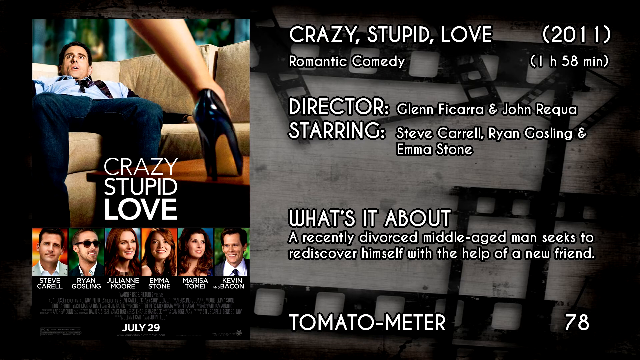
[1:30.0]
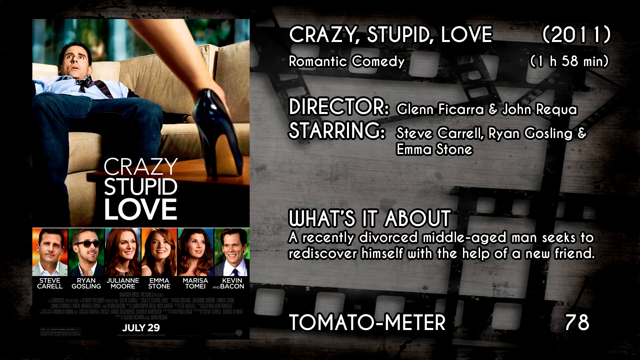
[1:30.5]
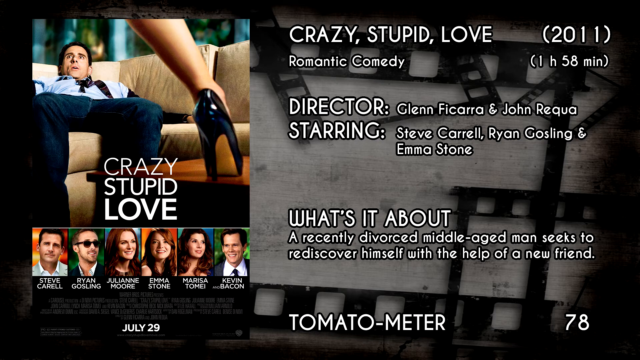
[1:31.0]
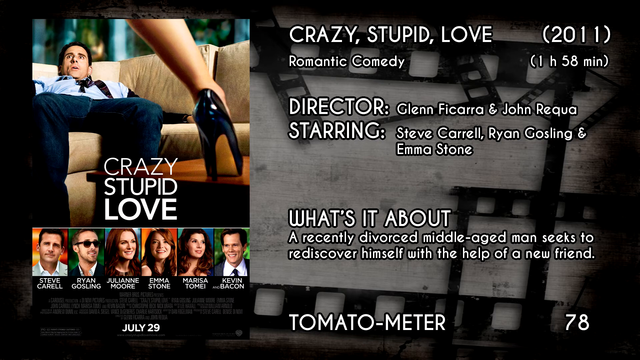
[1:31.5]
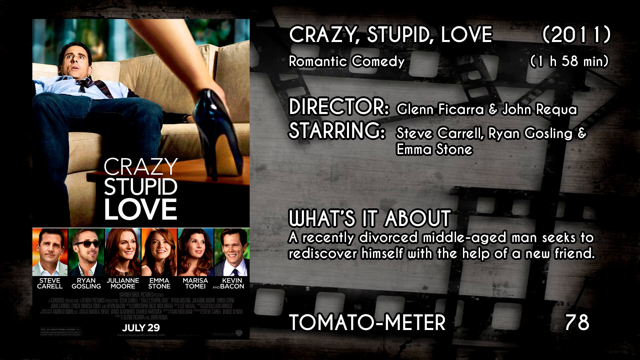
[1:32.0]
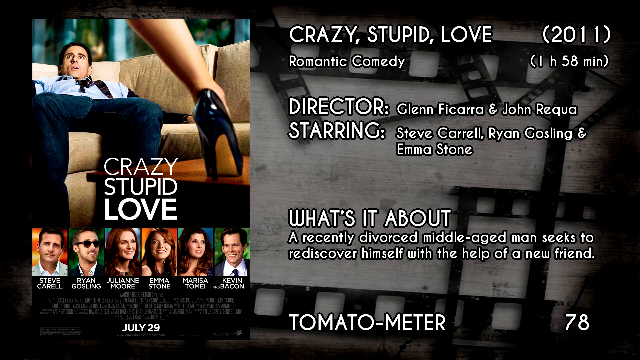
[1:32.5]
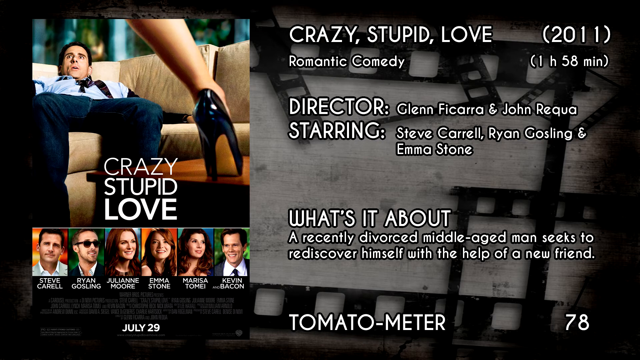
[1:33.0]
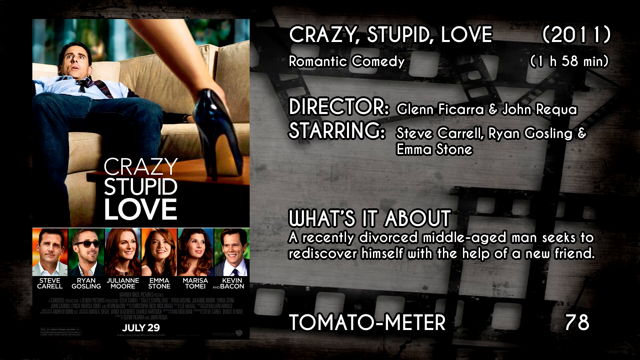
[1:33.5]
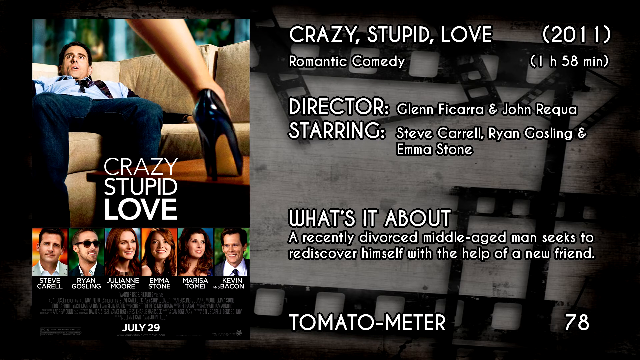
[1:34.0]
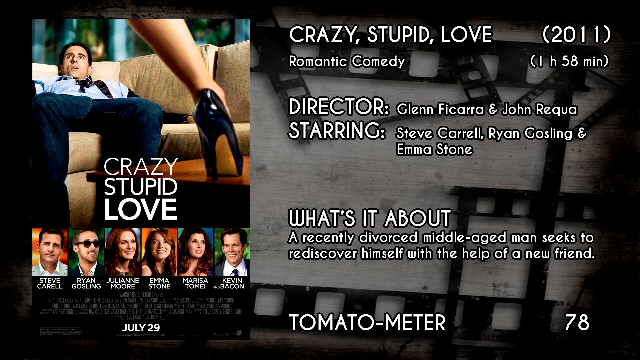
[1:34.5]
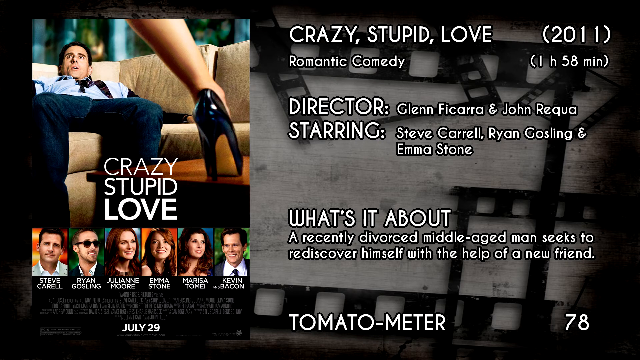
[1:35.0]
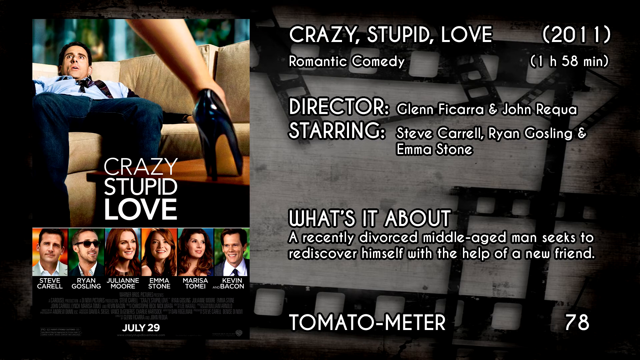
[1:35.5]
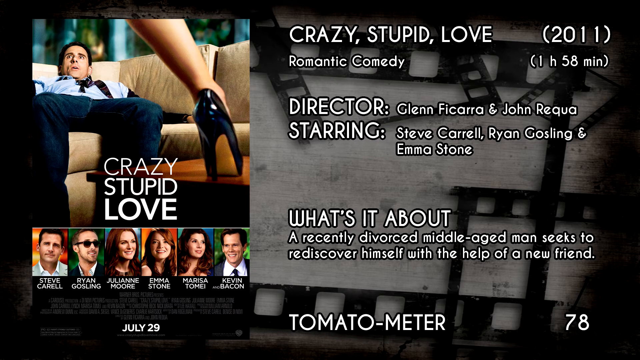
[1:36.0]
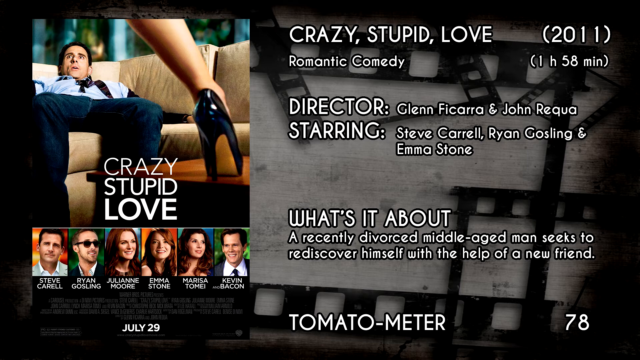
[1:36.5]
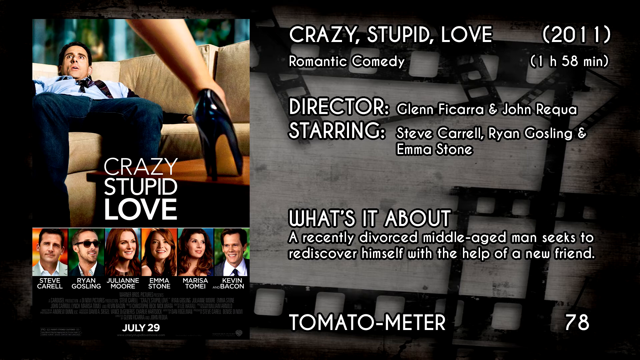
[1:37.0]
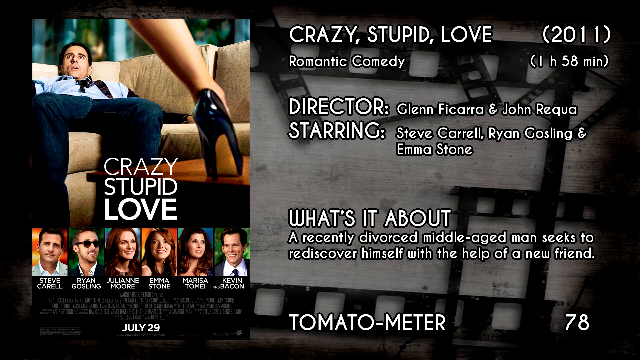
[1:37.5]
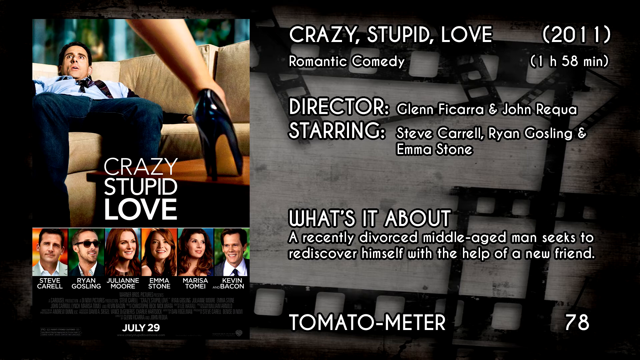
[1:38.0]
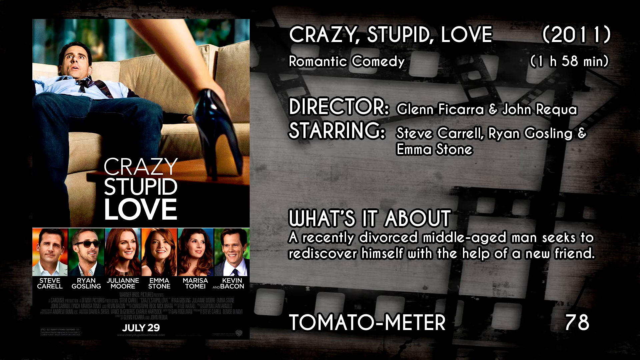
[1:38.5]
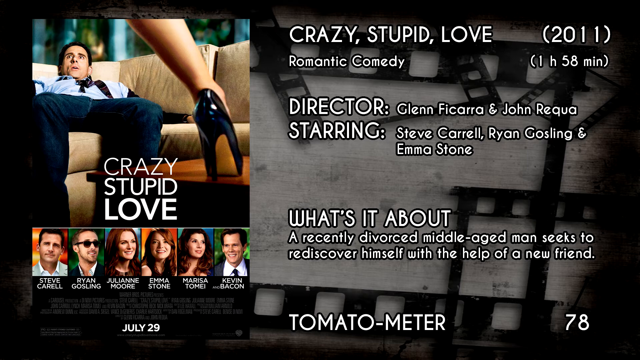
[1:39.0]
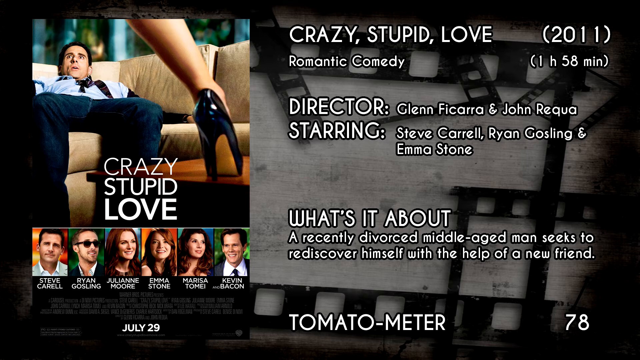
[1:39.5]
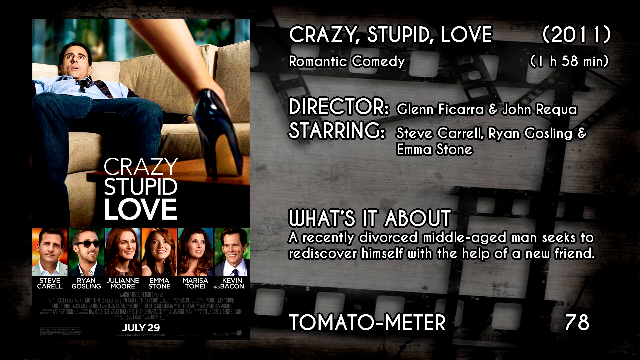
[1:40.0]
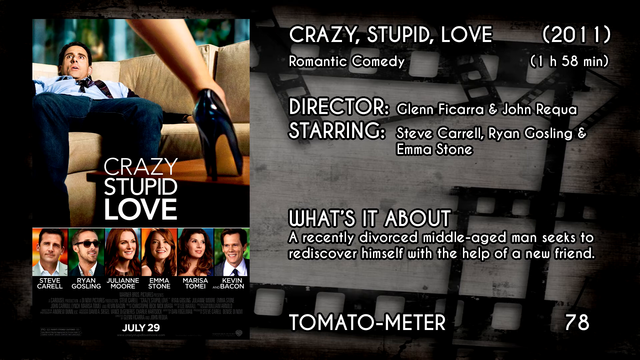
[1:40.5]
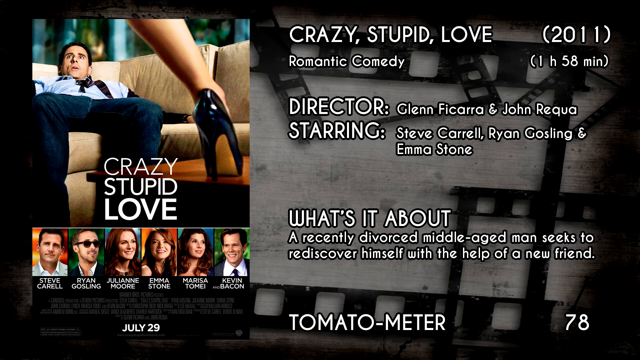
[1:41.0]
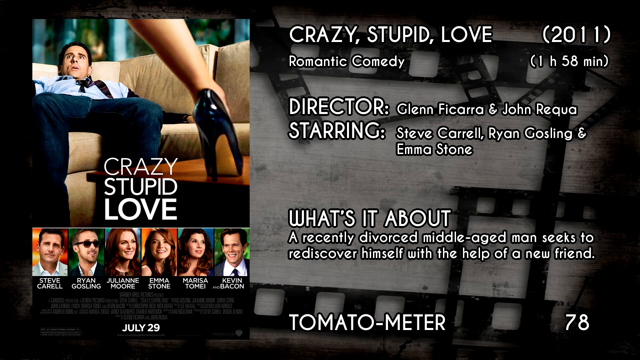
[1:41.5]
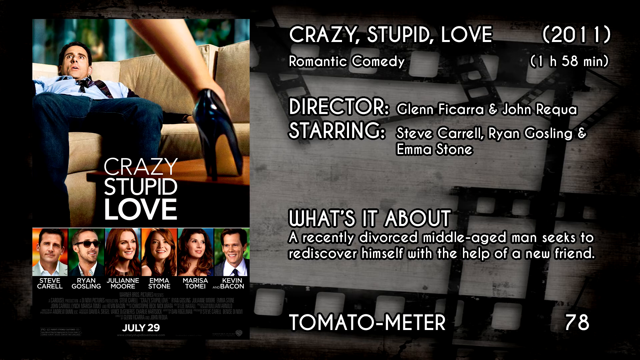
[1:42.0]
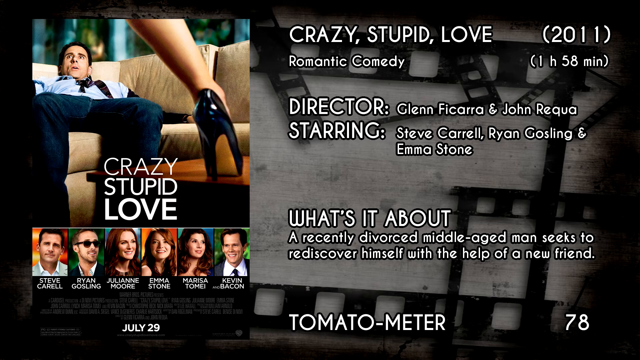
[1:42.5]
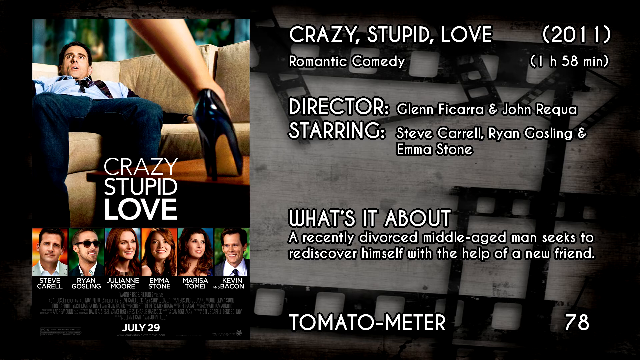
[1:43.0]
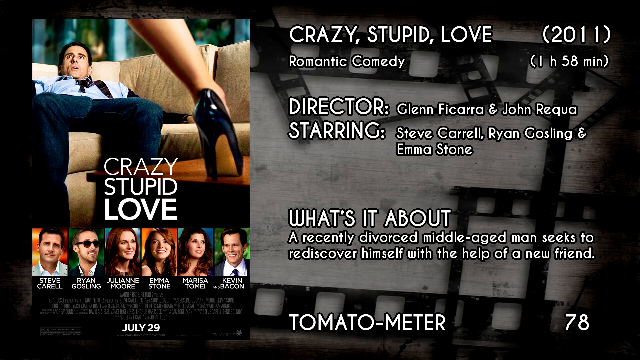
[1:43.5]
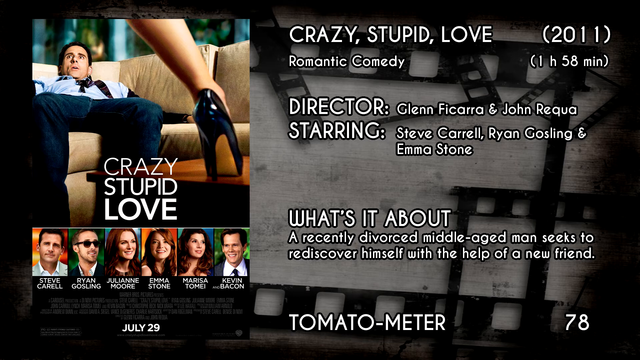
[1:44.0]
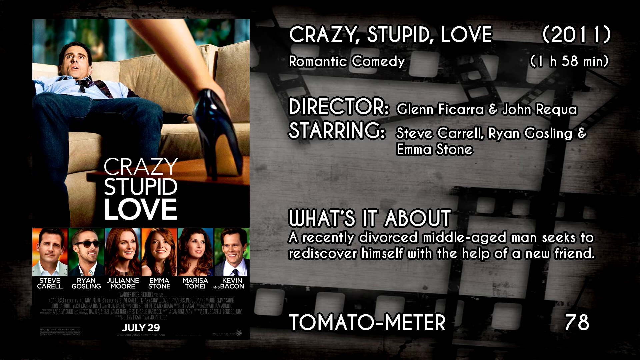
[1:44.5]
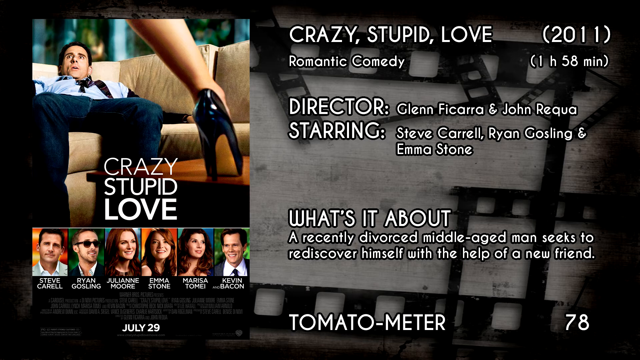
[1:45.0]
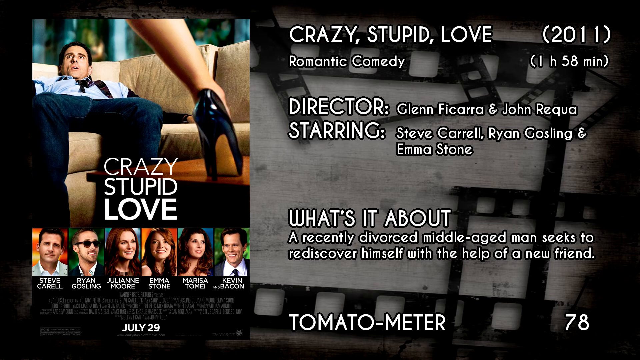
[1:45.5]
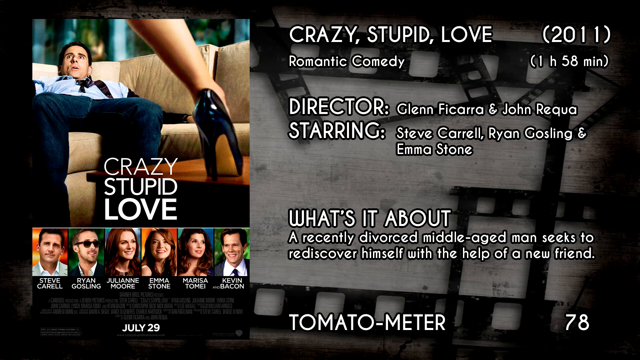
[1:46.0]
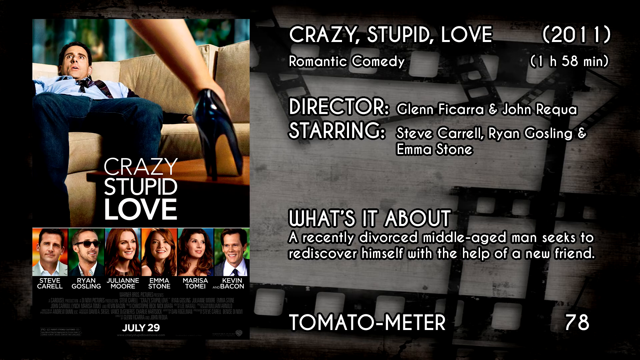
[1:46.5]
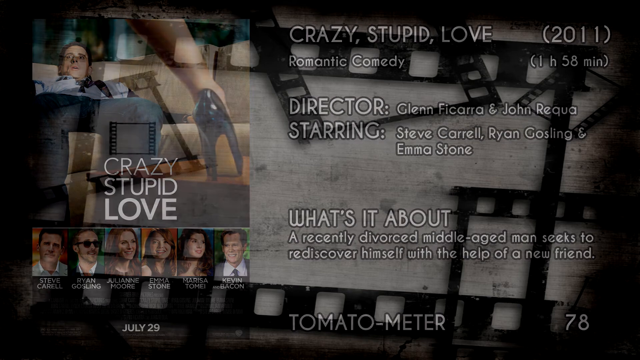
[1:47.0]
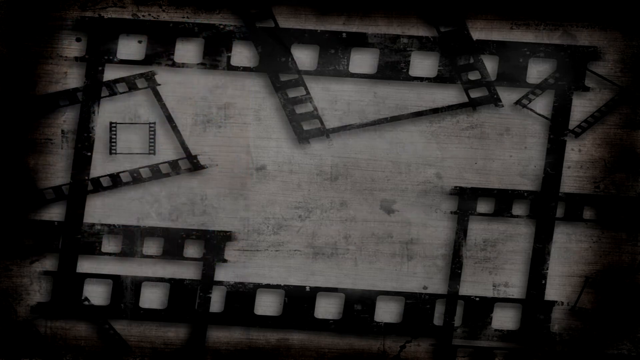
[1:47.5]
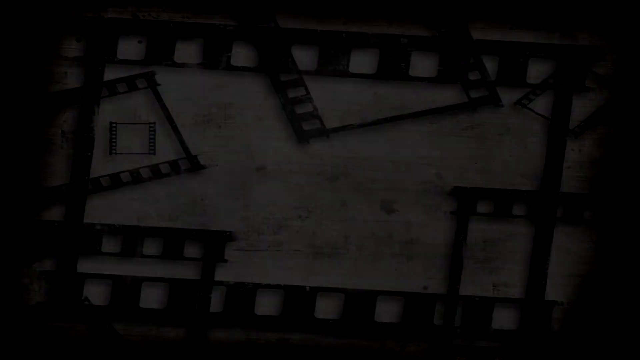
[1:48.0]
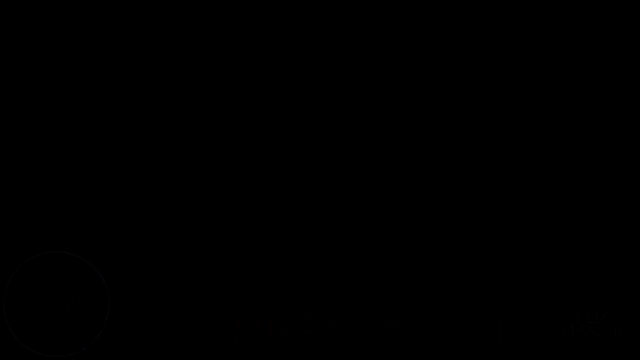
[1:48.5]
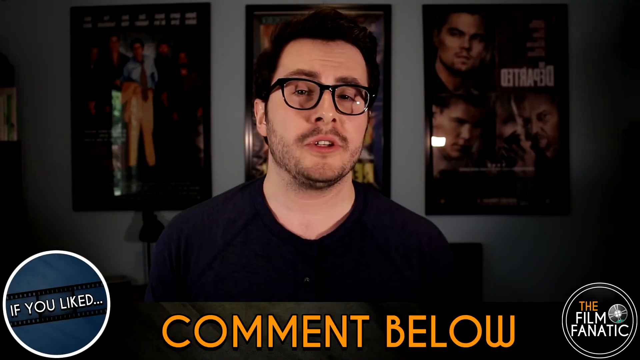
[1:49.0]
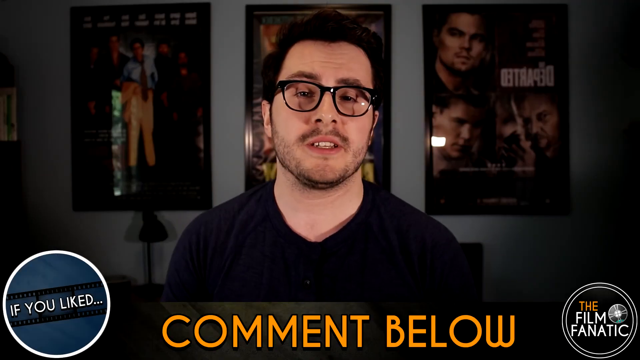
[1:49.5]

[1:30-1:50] Crazy Stupid Love appears on the screen: a 2011 romantic comedy 1 hour and 58 minutes long, directed by Glenn Ficarra along with John Requa and starring Steve Carell, Ryan Gosling and Emma Stone. Its summary: a recently divorced middle-aged man seeks to rediscover himself with the help of a new friend. The screen then goes back to the presenter, with a prompt on the screen to comment below.